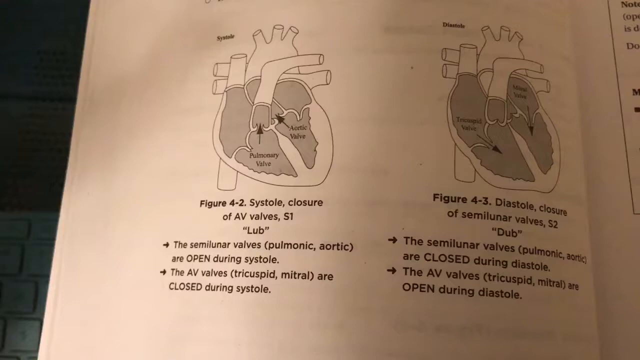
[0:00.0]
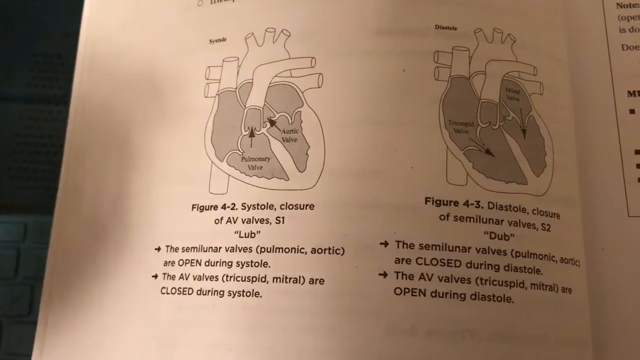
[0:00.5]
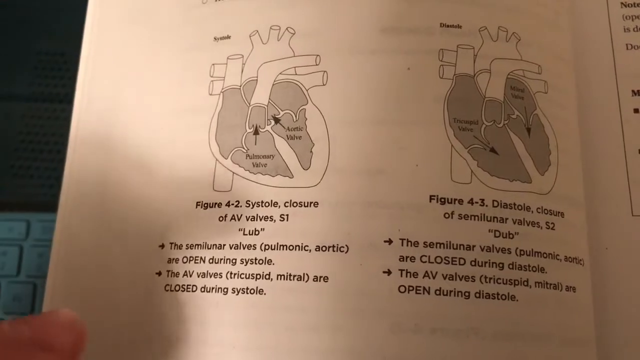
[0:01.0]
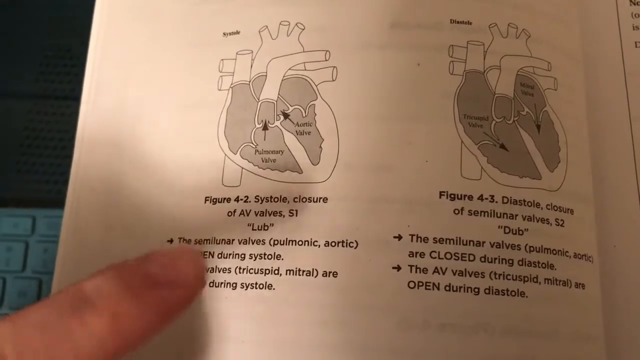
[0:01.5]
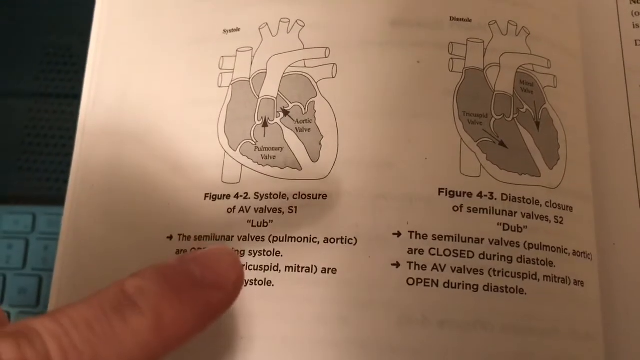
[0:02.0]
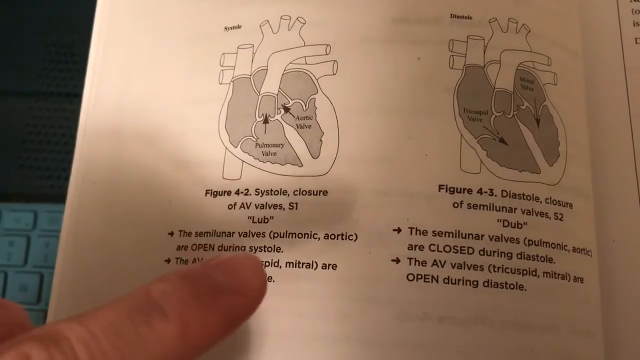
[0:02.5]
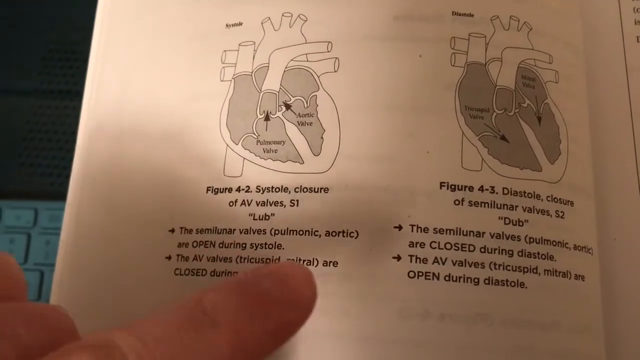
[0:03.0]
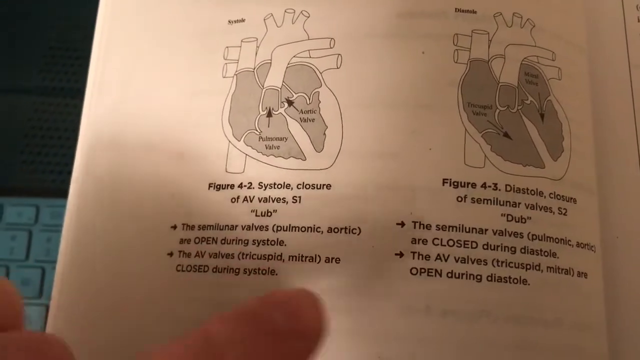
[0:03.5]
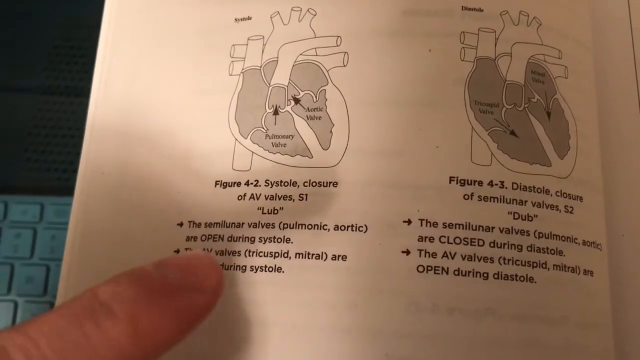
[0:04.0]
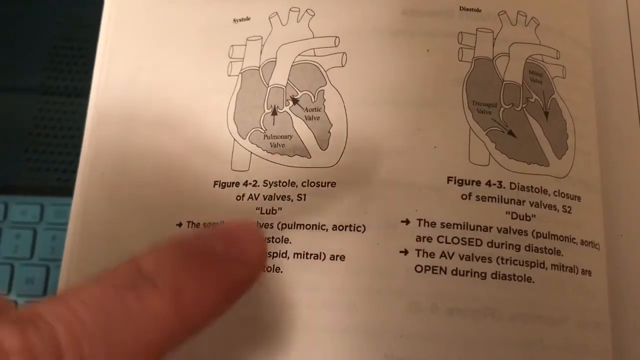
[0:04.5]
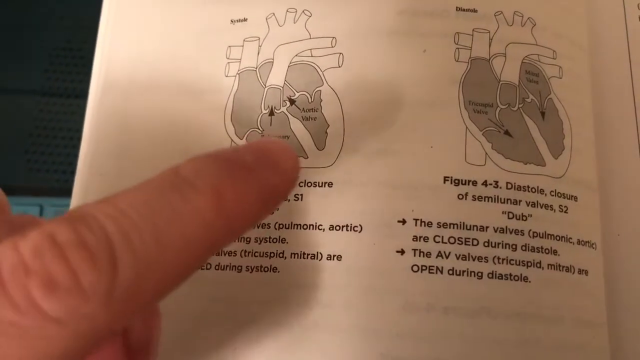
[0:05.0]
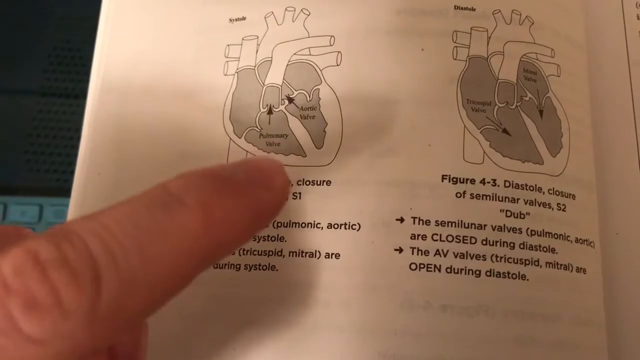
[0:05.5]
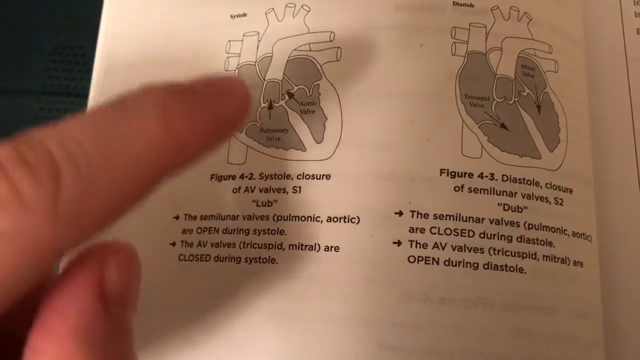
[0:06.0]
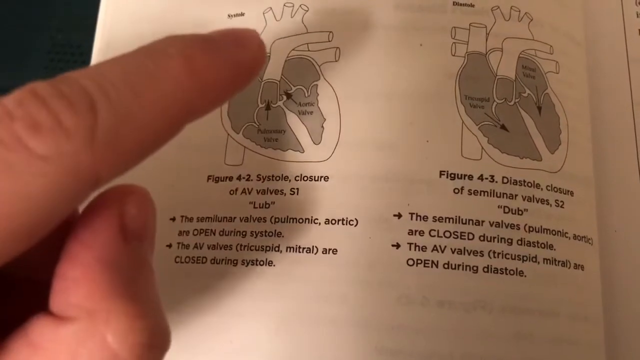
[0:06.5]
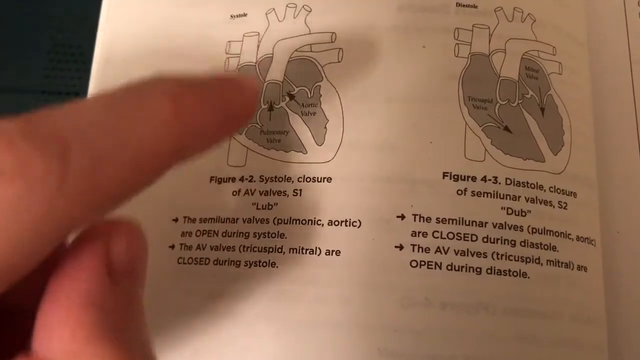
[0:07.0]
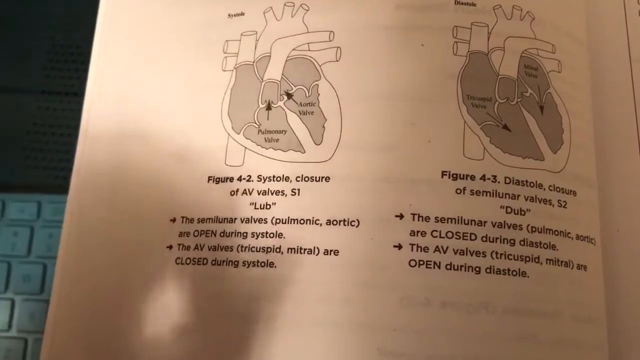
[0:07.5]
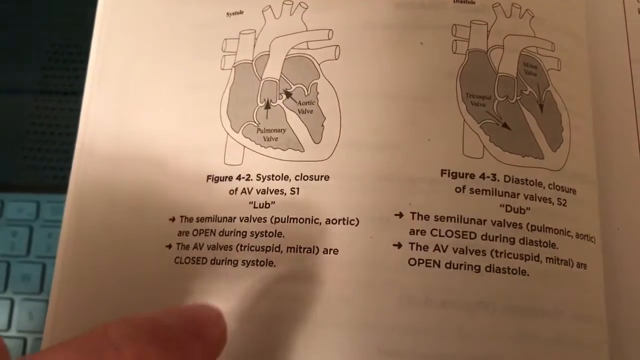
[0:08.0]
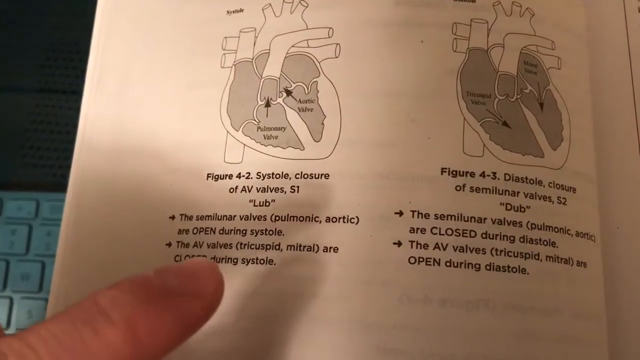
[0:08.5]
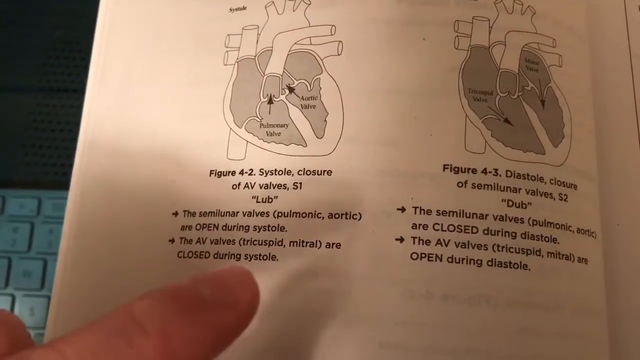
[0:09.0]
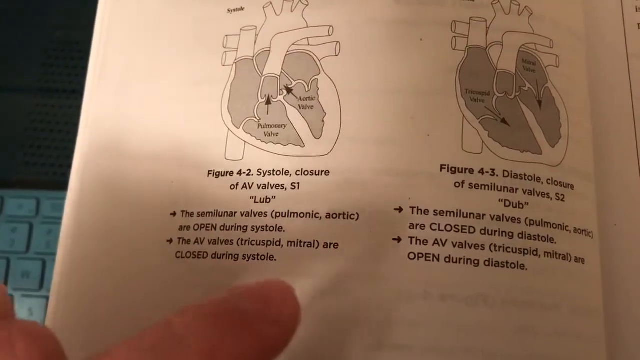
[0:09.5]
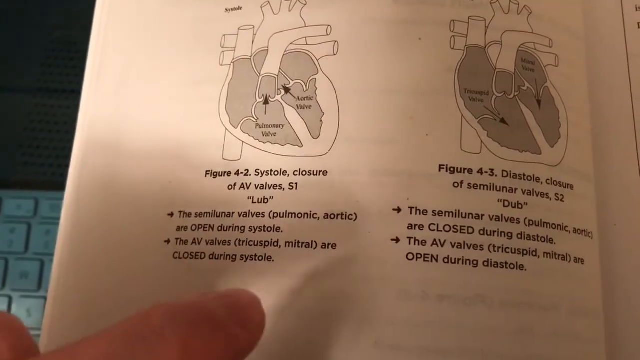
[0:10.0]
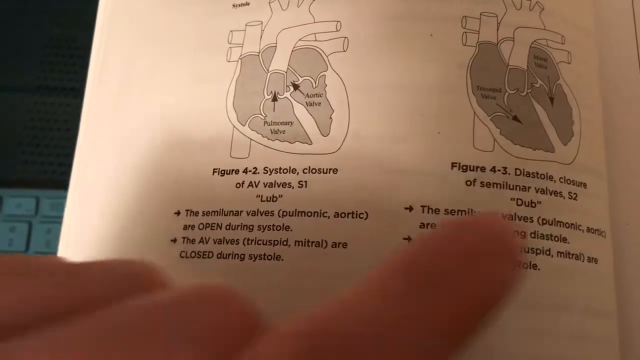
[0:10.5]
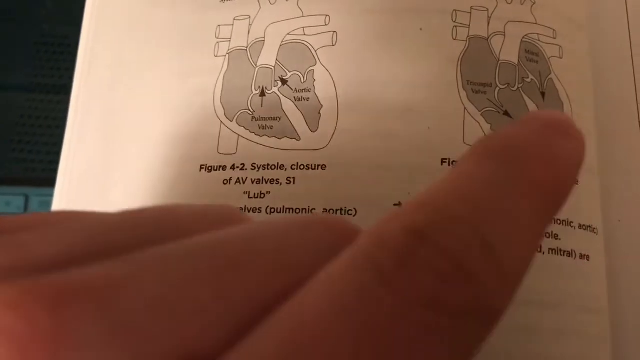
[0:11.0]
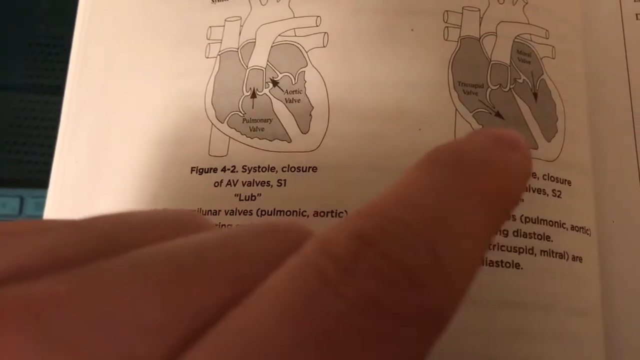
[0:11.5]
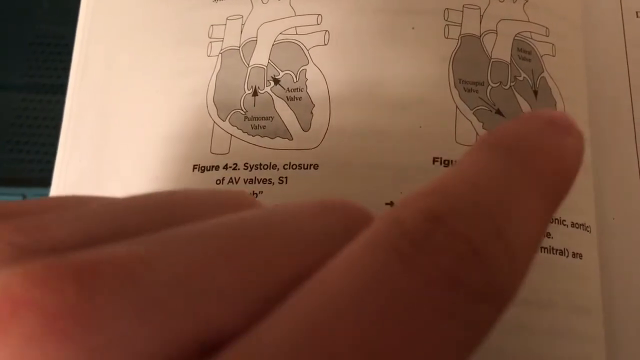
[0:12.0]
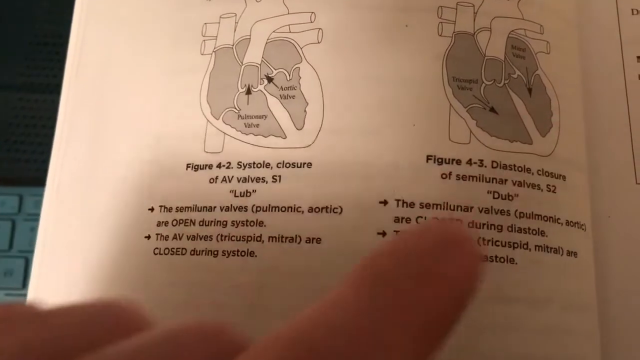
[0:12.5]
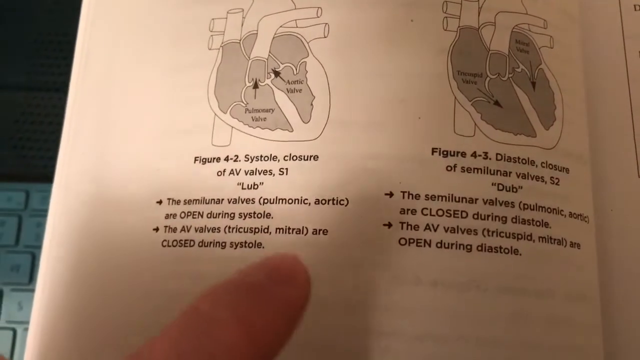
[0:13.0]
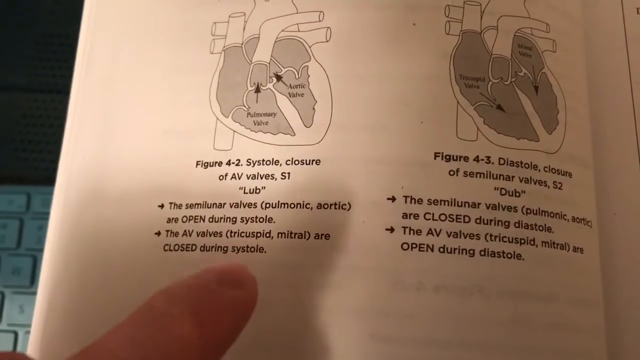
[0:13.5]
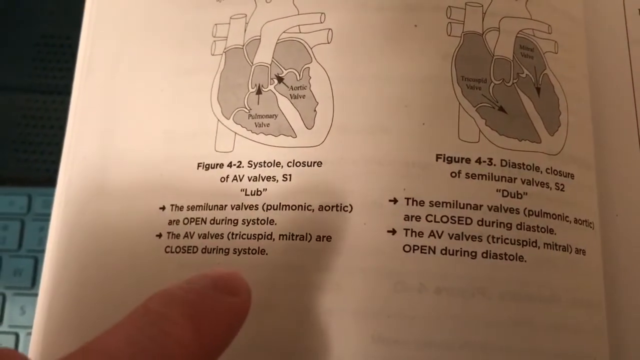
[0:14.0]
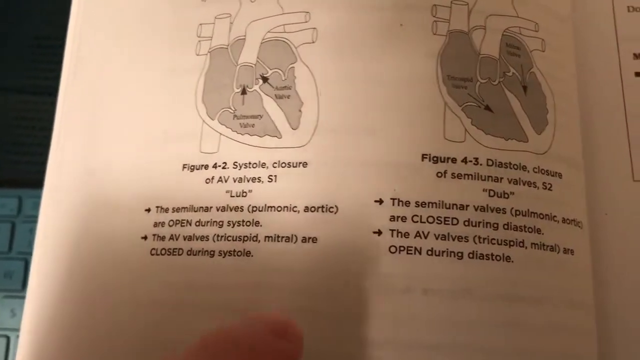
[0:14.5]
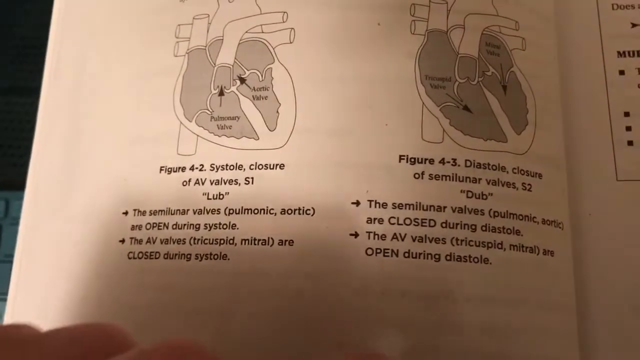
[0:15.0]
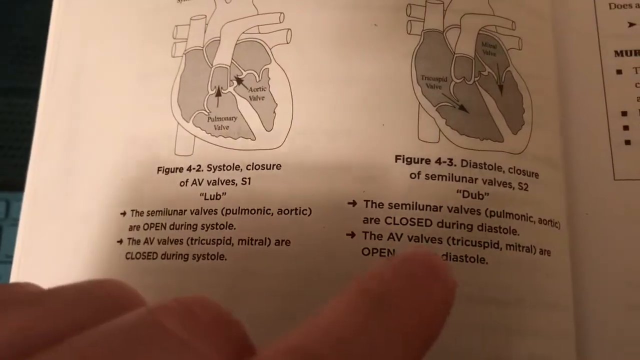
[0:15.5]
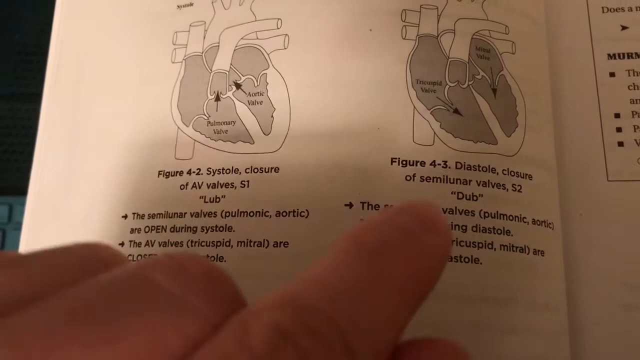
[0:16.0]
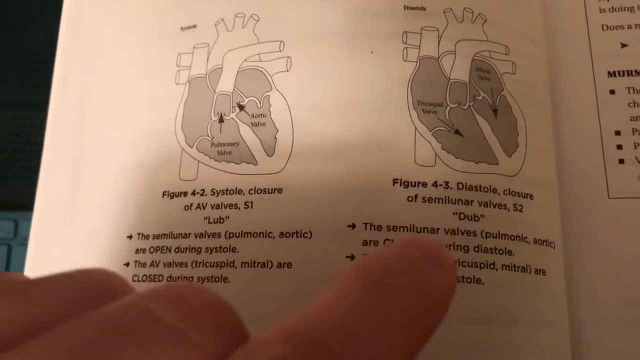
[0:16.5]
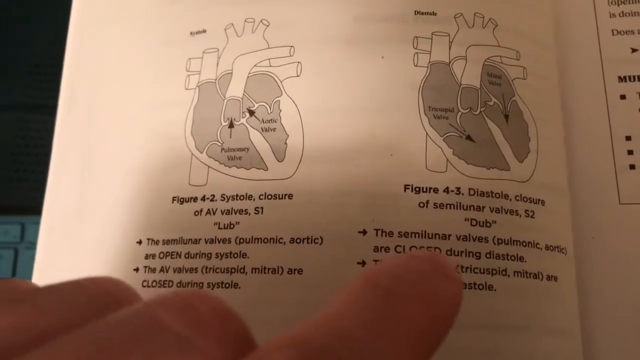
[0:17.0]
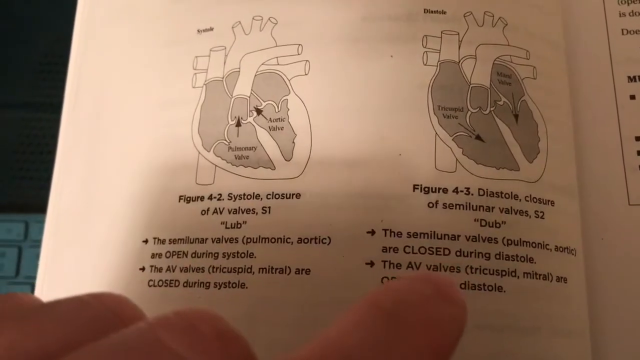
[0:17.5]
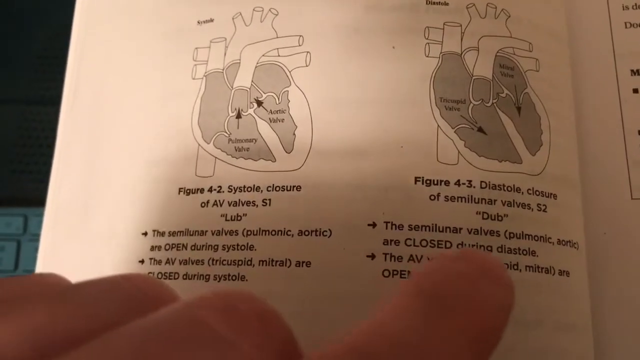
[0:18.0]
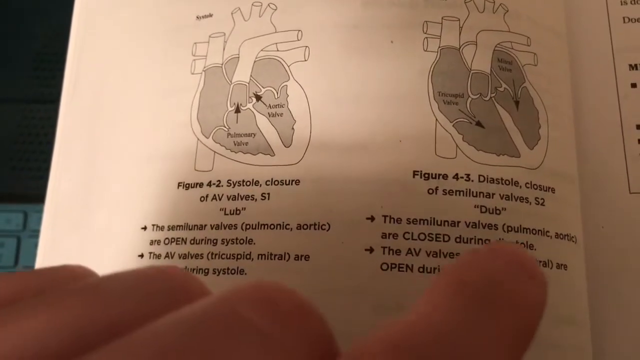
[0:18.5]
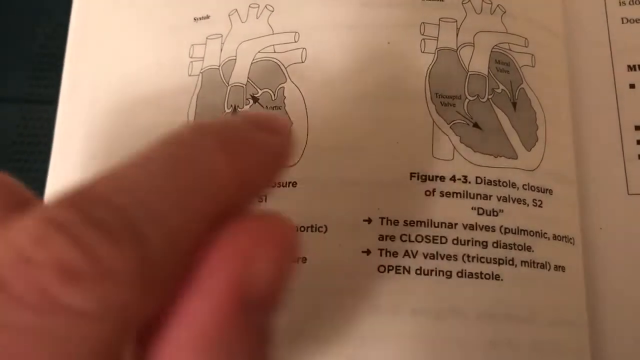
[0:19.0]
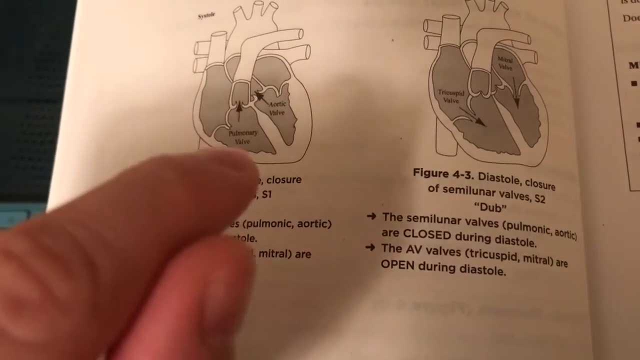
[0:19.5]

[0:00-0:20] A medical book lies open on a surface, its page showing diagrams of the systole closure of AV valves and the diastole closure of semilunar valves. Someone's finger points to the information below the first diagram, on the left: "figure 4.2. Systole closure of AV valves S1 Lub." The finger then points to the heart cross-section diagram and to notes at the bottom that say "the semilunar valves, pulmonic, aortic, are open during systole. The AV valves, tricuspid, mitral, are closed during systole." Next the finger moves to the second diagram, "figure 4.3, diastole closure of semilunar valves S2 Dub," where the notes say "diastole closures of semilunar valves, the semilunar valves pulmonic, aortic are closed during diastole. The AV valves, tricuspid, mitral are open during diastole." Both diagrams illustrate these explanations, with arrows pointing in the direction in which the valves open.